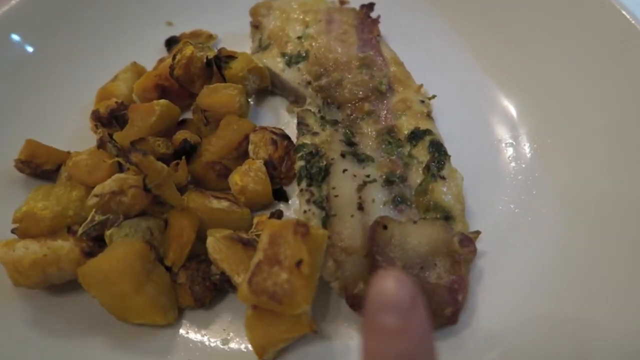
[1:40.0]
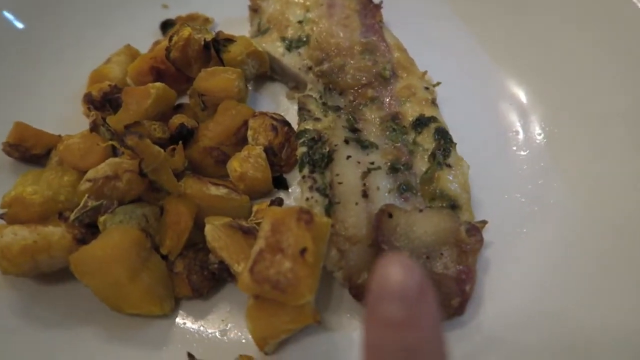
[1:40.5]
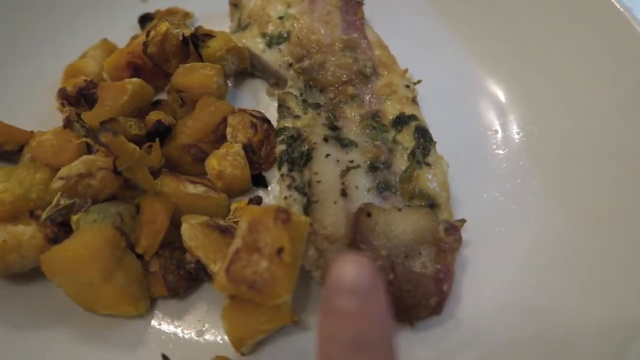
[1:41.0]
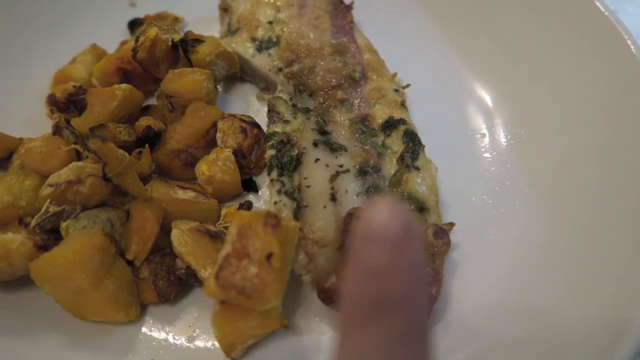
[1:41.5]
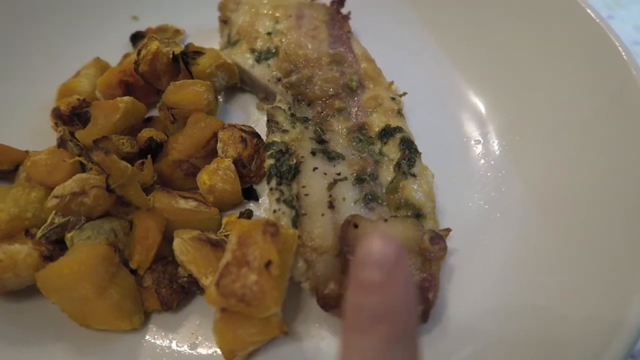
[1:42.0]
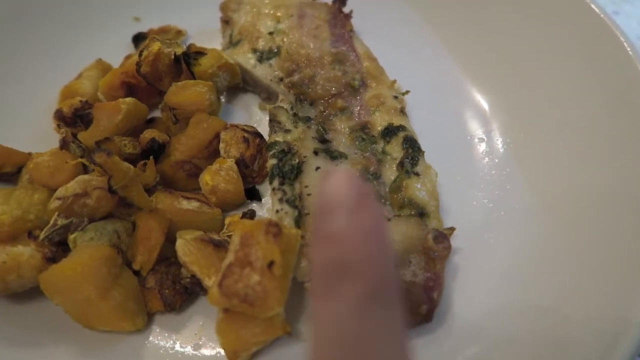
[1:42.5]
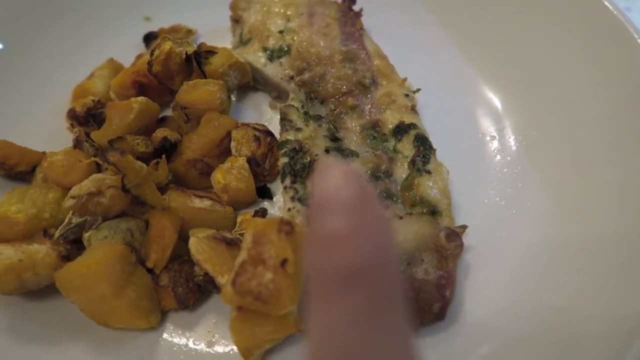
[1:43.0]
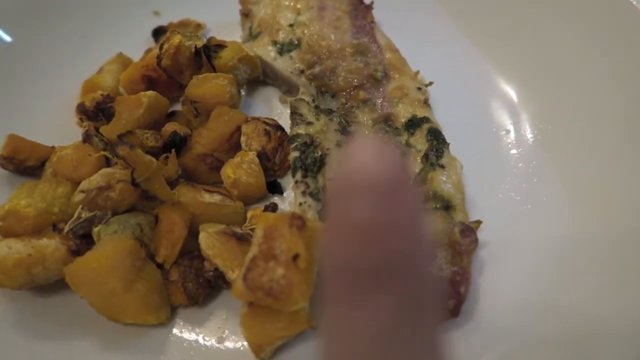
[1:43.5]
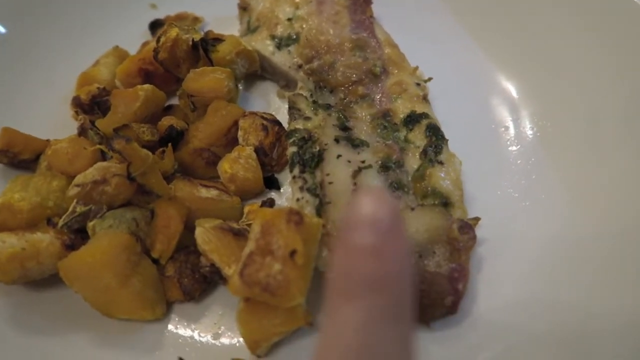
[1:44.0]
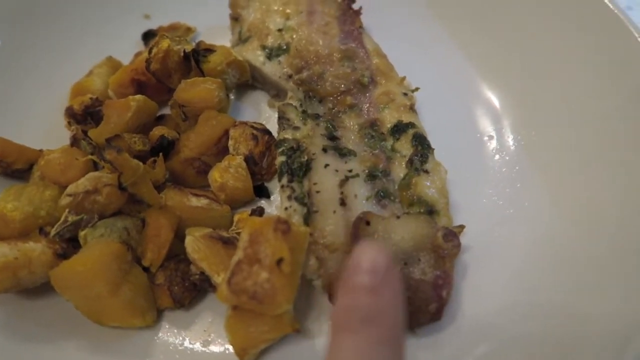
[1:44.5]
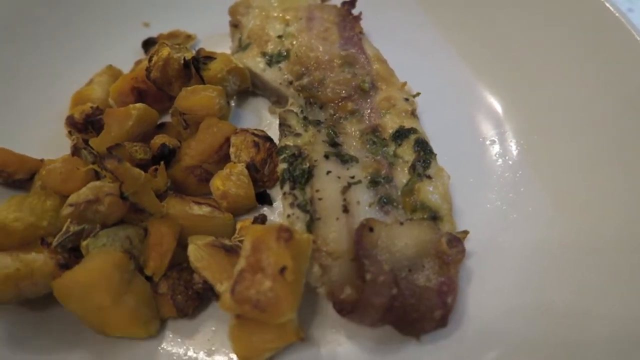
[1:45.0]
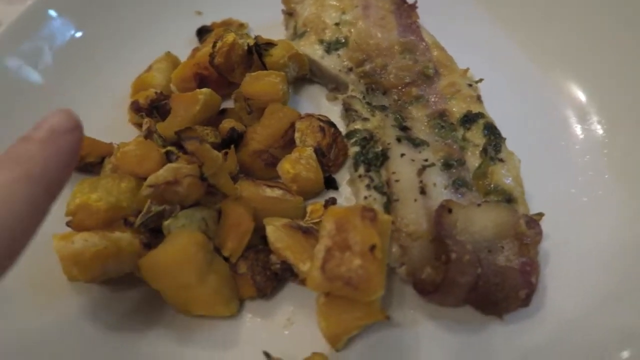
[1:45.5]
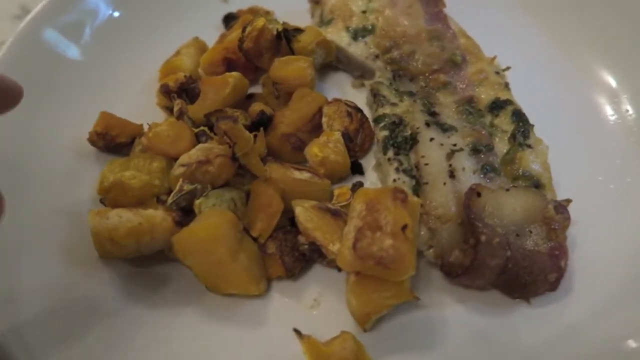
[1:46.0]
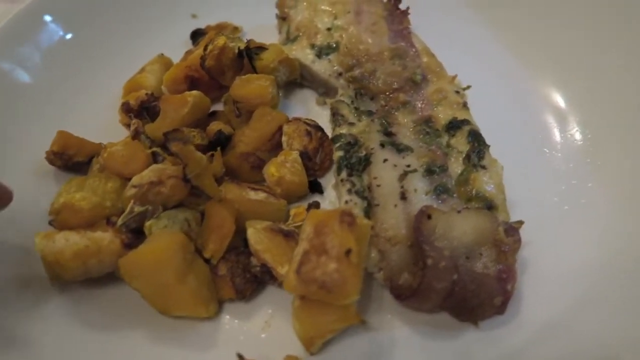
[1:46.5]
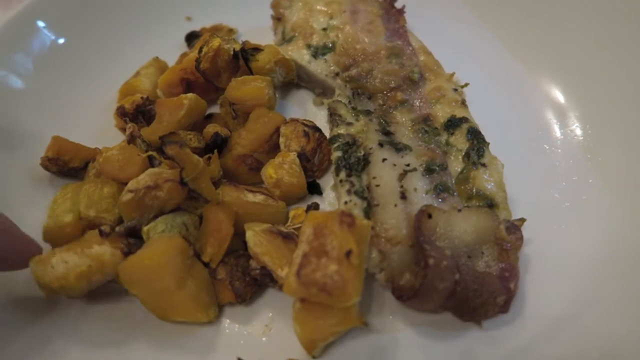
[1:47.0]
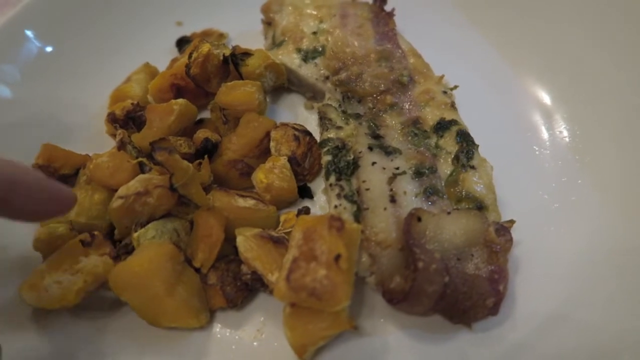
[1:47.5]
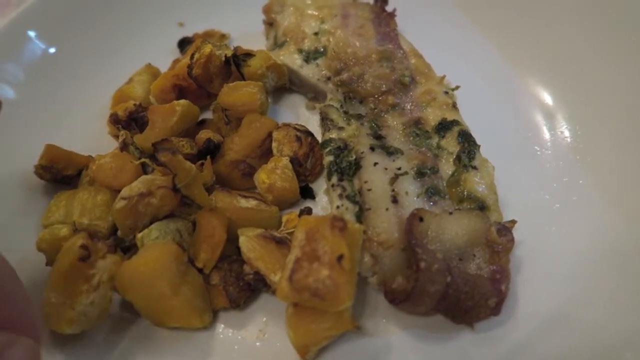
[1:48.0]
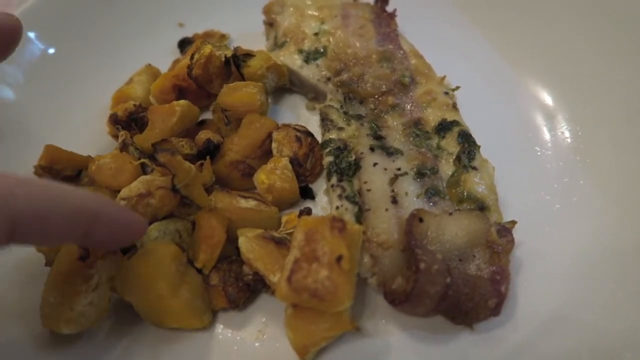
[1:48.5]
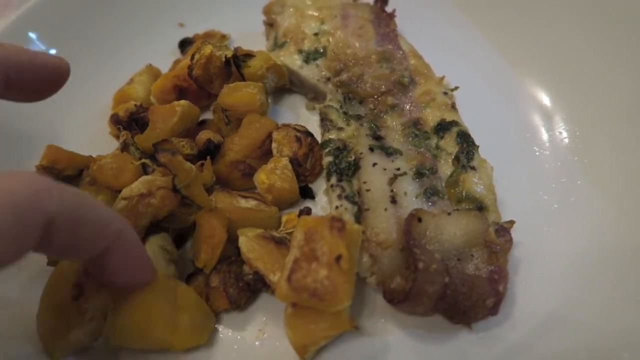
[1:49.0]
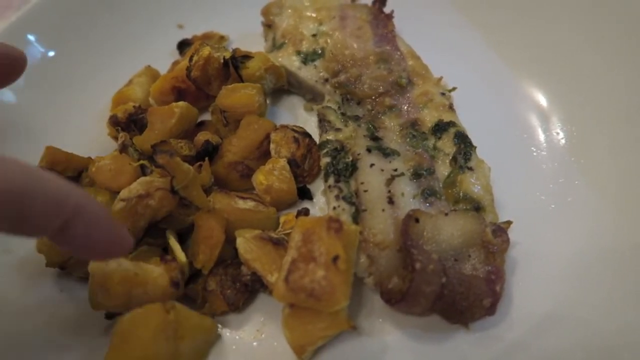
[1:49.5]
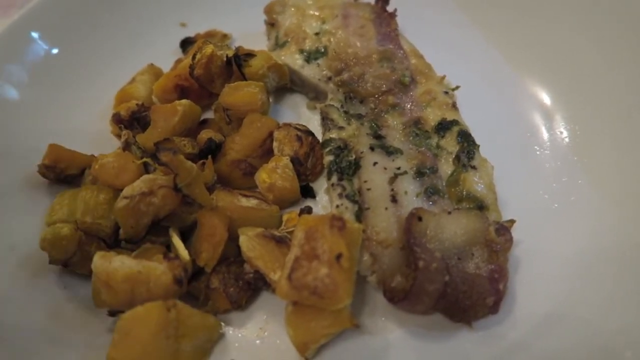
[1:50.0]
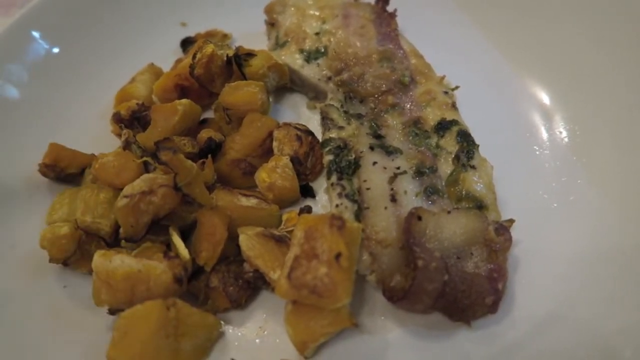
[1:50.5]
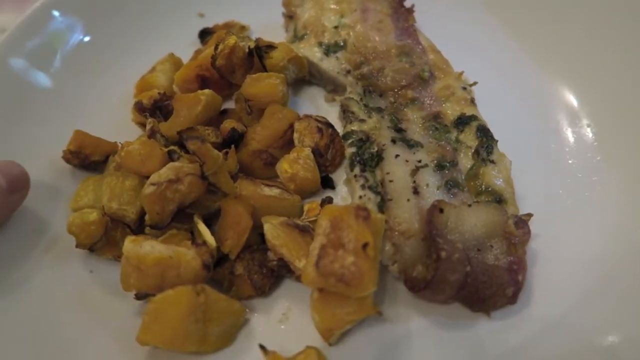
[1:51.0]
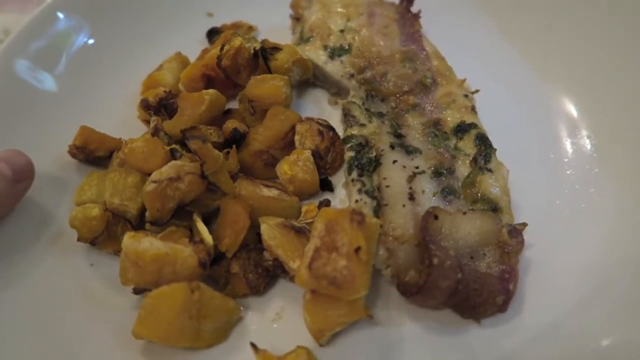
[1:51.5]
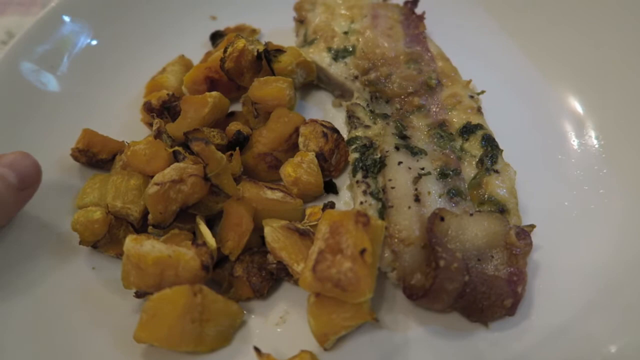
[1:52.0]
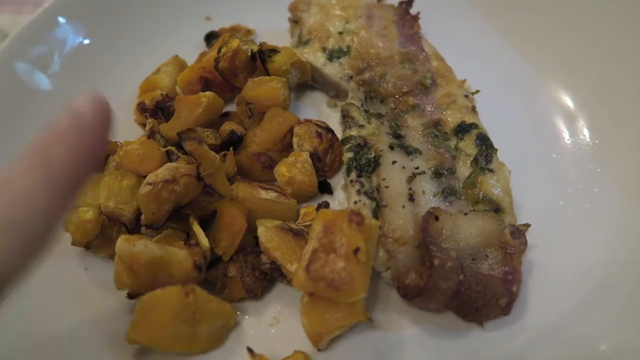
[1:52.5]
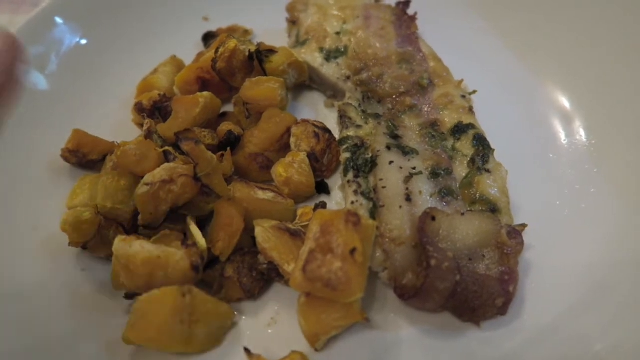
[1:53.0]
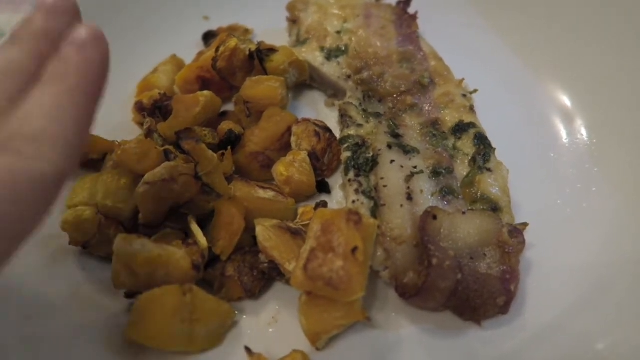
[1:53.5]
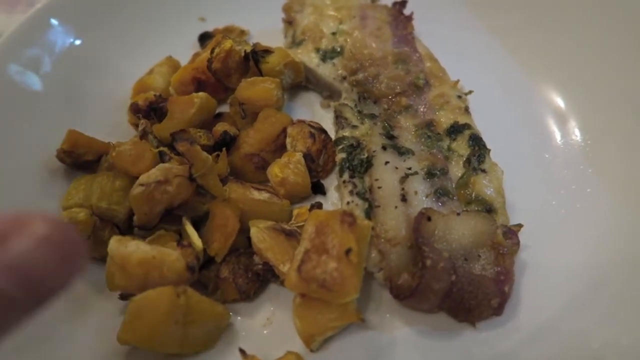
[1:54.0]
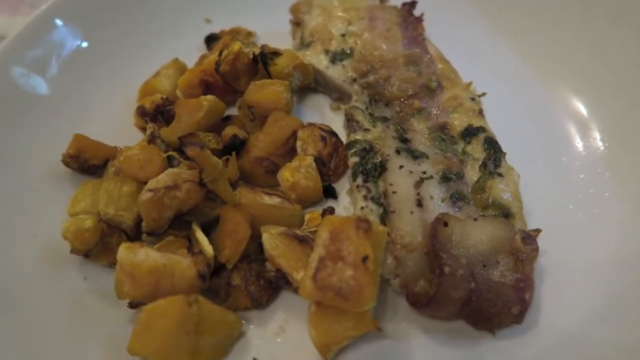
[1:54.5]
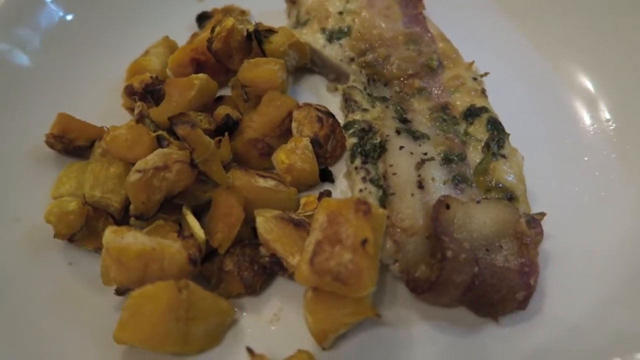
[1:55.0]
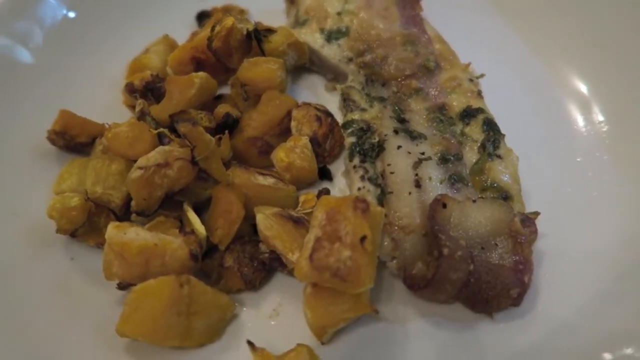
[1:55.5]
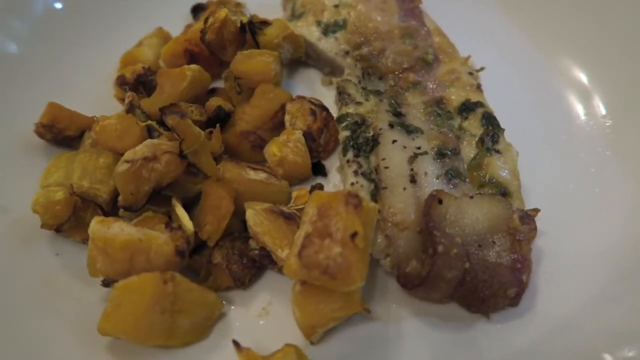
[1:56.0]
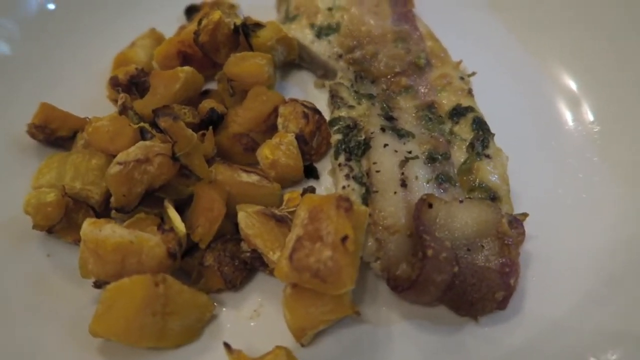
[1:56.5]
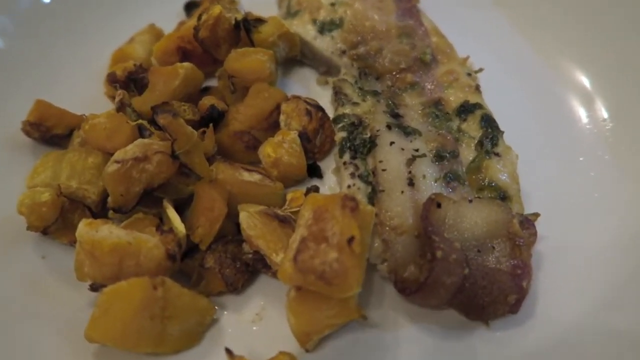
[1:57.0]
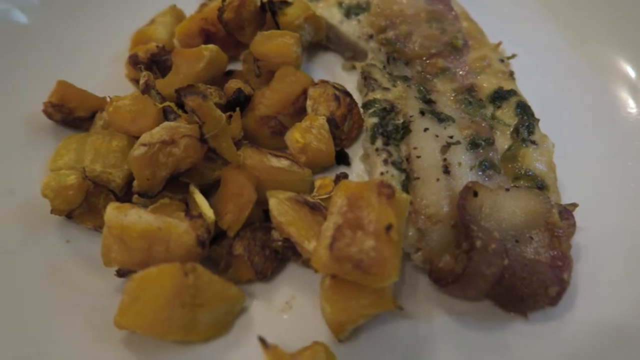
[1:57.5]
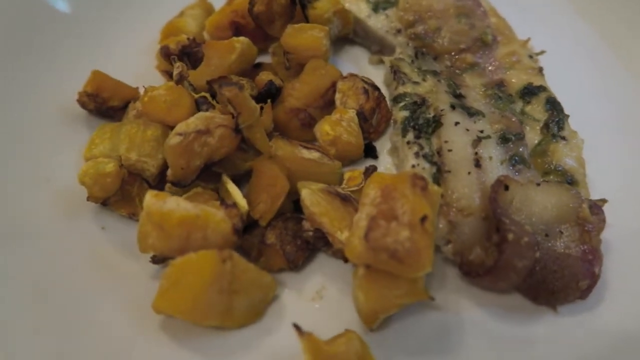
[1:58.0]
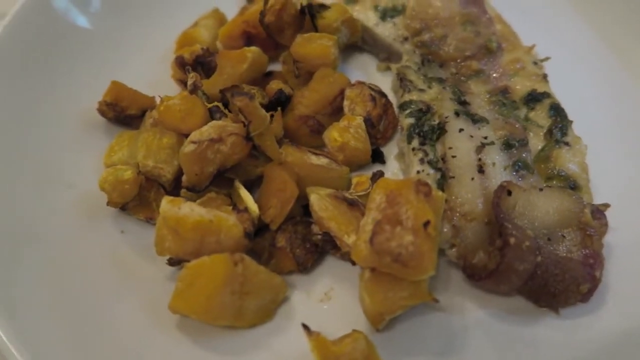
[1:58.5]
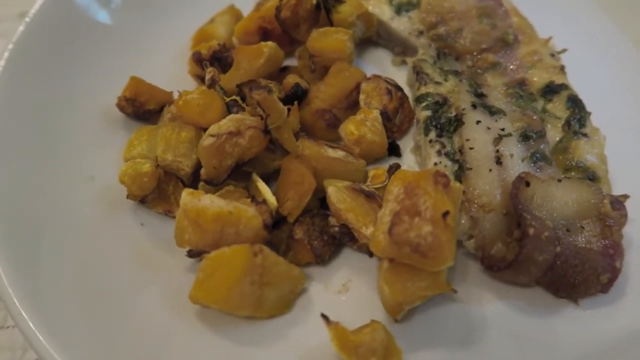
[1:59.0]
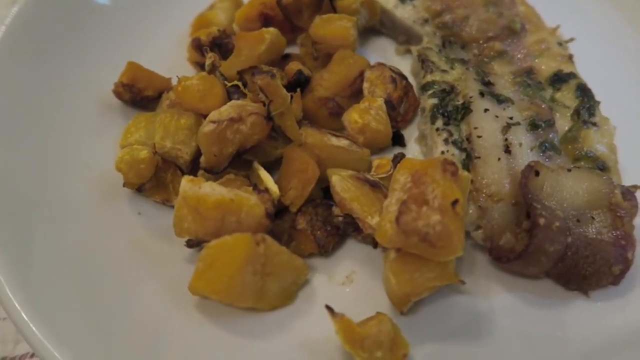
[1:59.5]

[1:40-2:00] A plate displays fried butternut and bacon. Green stuff, spinach, is on the bacon, with the fried butternuts at the side of the bacon. The dish is ready to eat and is mostly vegetables. The bacon is fried, and no oil is visible coming through on it.